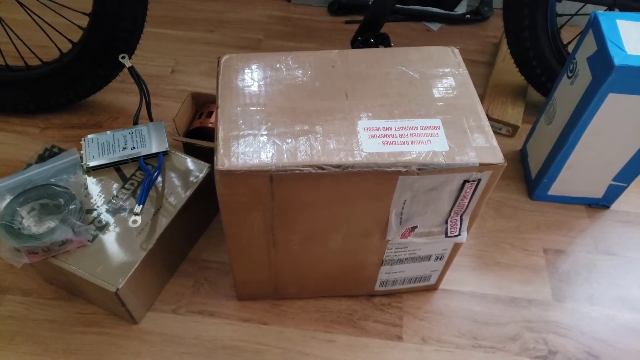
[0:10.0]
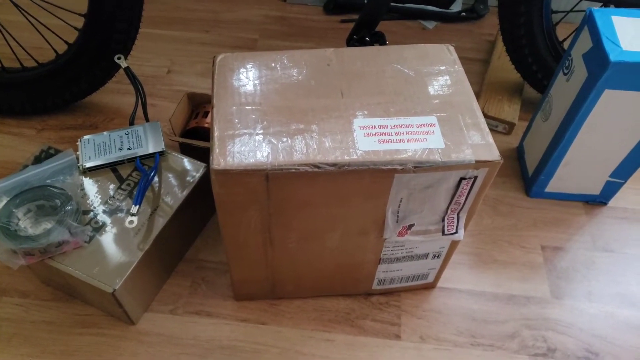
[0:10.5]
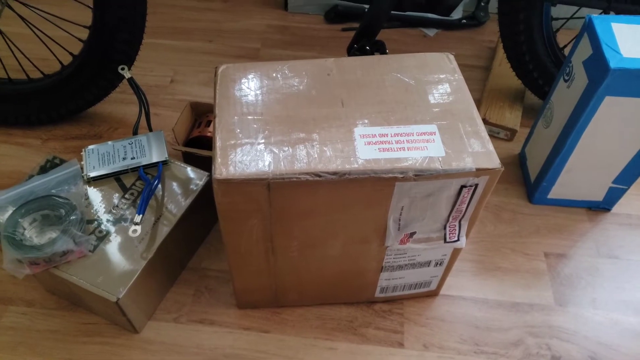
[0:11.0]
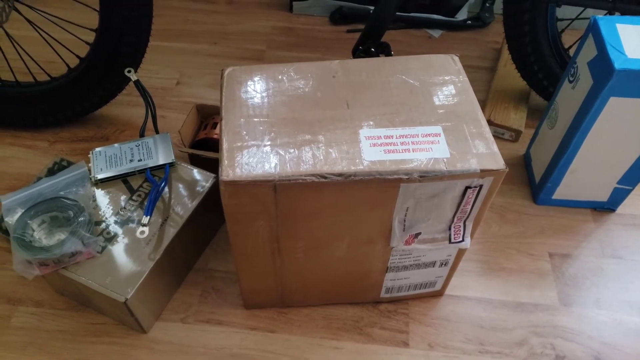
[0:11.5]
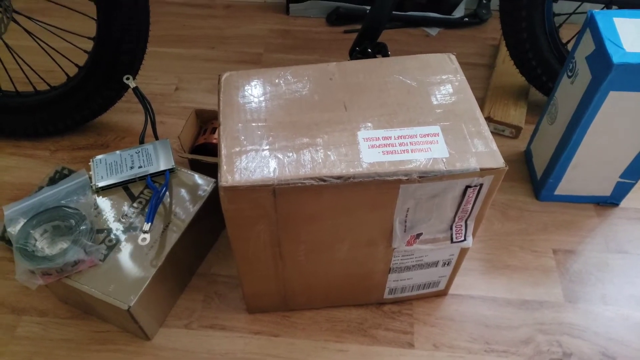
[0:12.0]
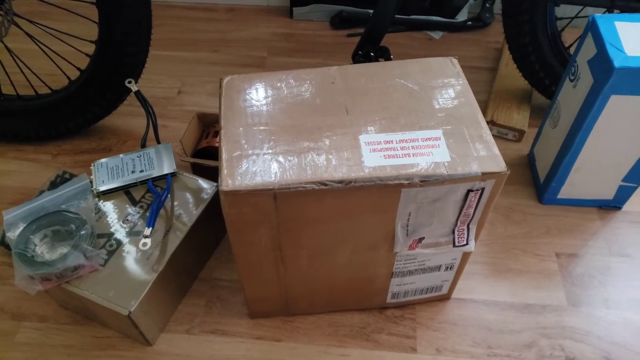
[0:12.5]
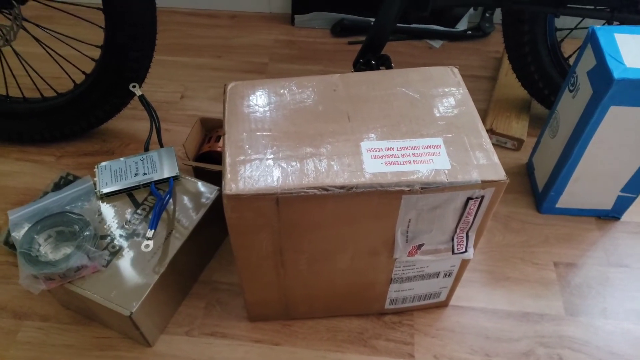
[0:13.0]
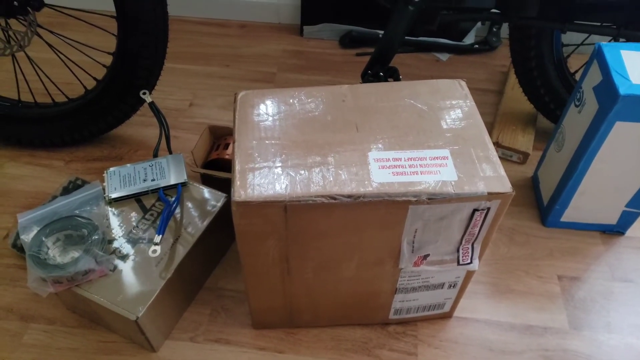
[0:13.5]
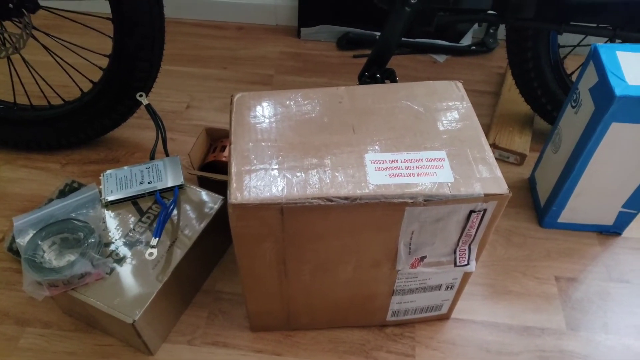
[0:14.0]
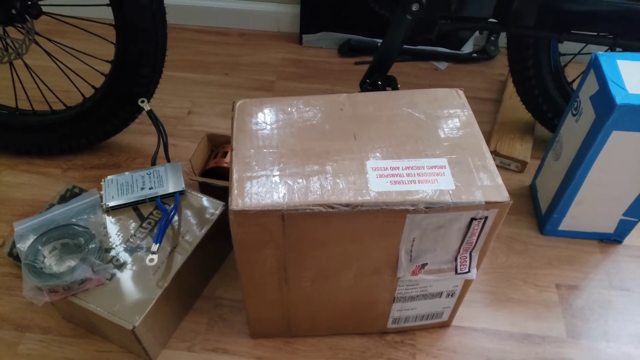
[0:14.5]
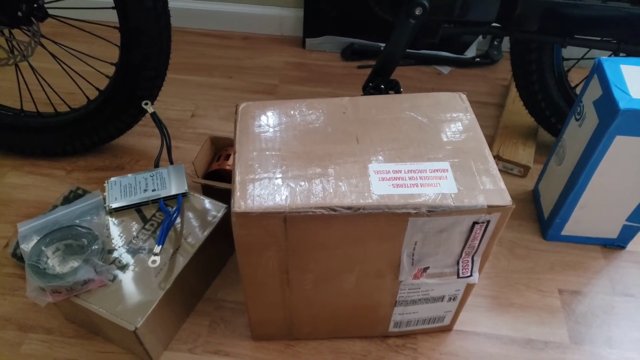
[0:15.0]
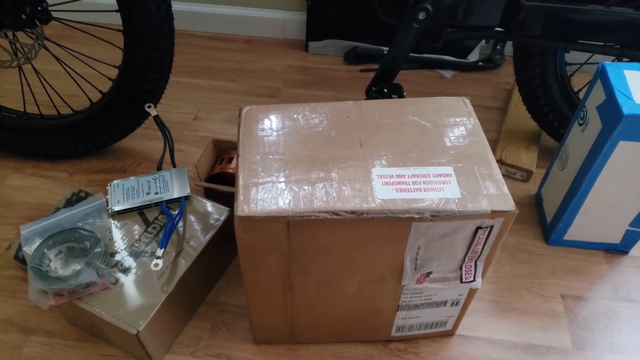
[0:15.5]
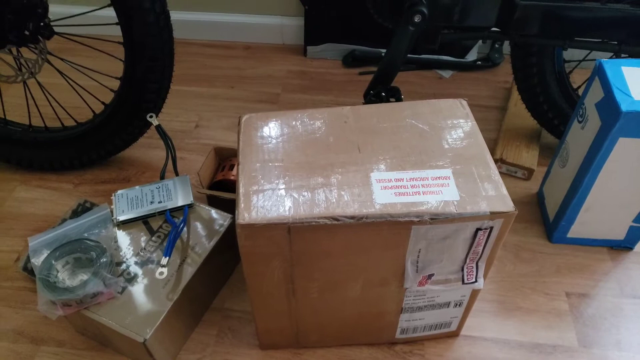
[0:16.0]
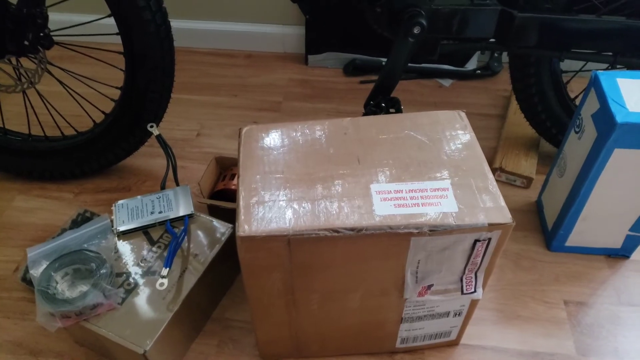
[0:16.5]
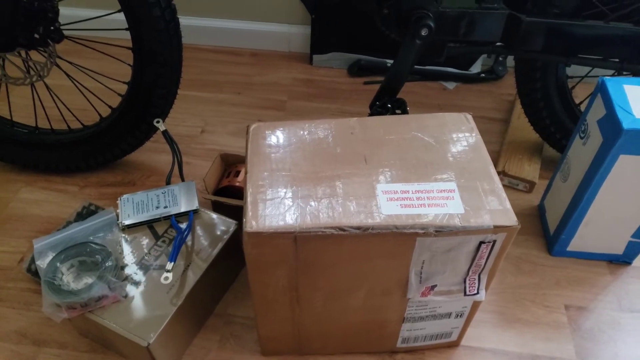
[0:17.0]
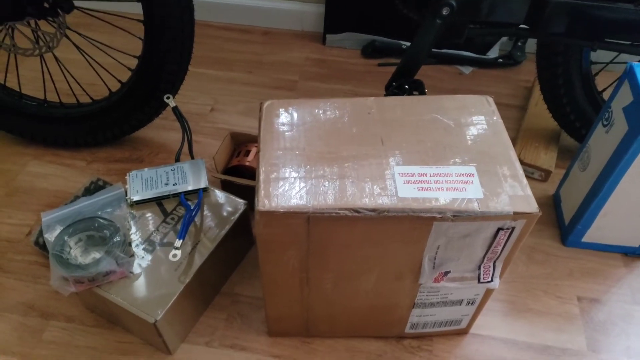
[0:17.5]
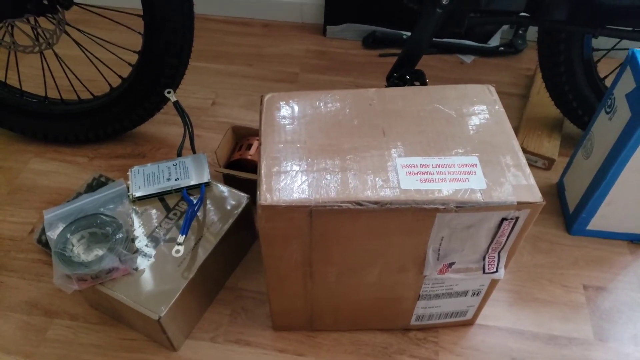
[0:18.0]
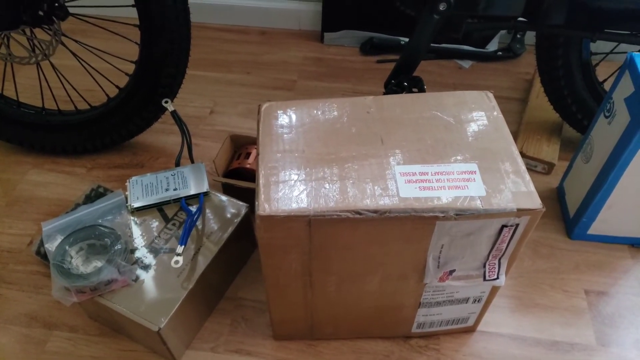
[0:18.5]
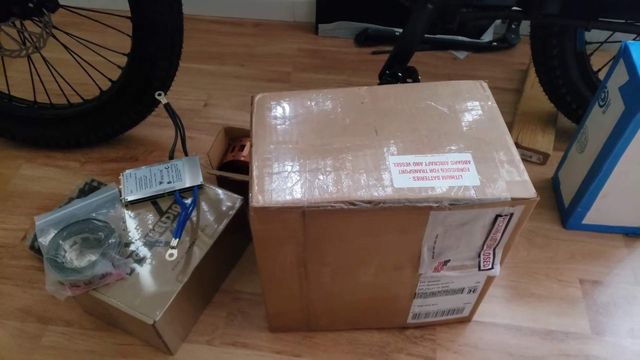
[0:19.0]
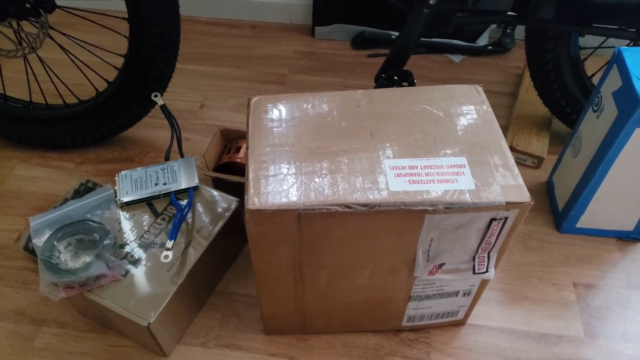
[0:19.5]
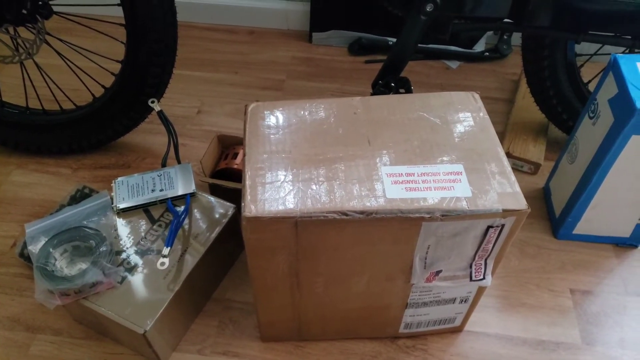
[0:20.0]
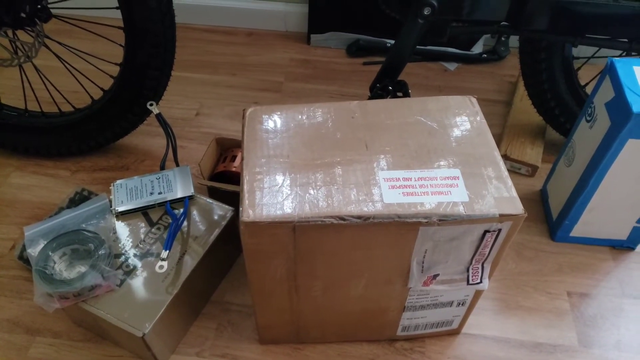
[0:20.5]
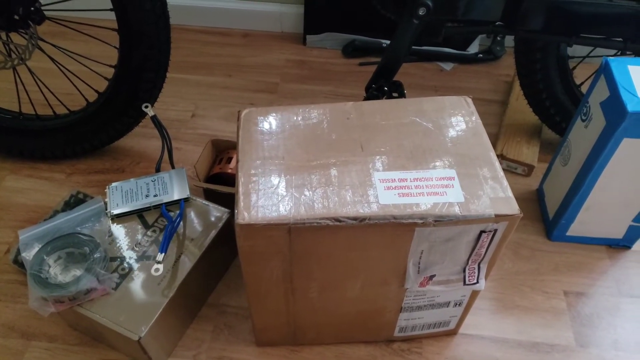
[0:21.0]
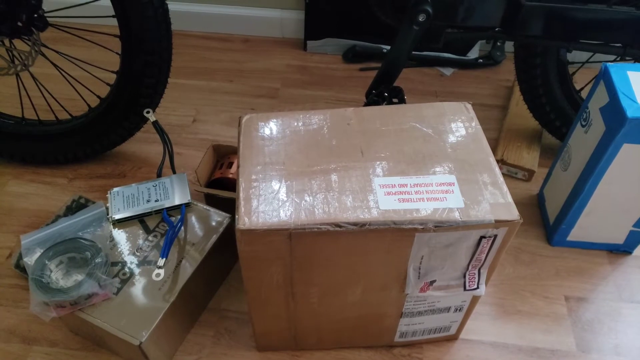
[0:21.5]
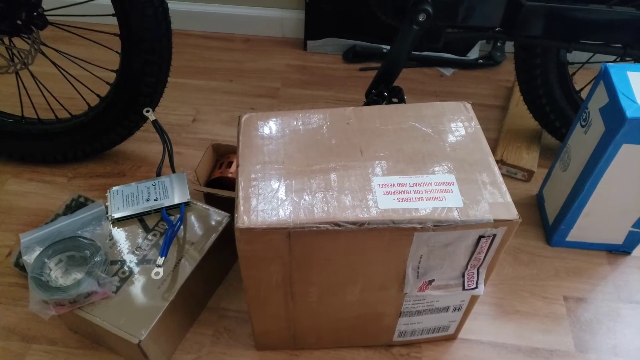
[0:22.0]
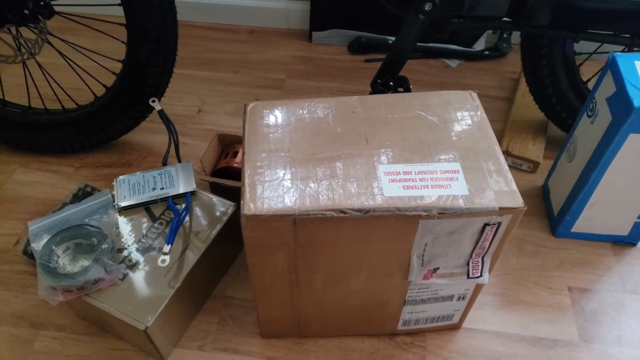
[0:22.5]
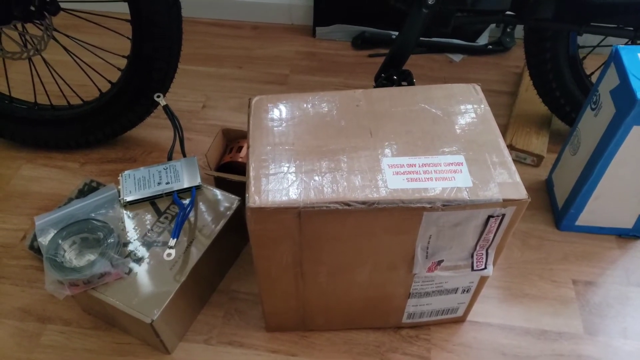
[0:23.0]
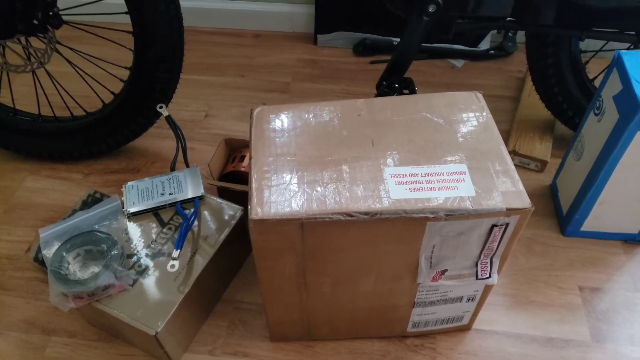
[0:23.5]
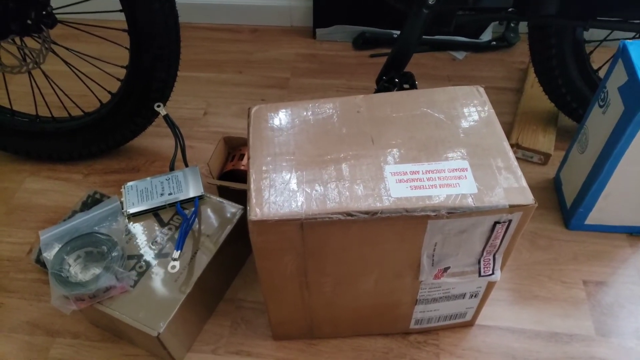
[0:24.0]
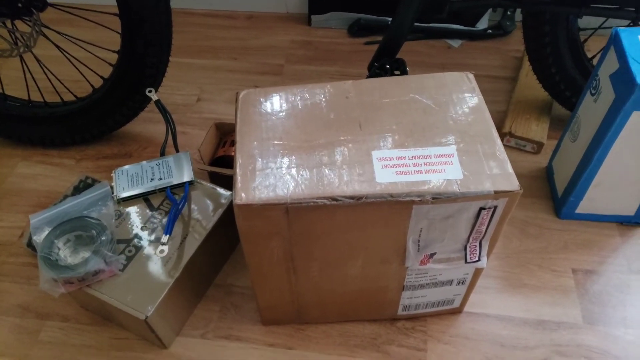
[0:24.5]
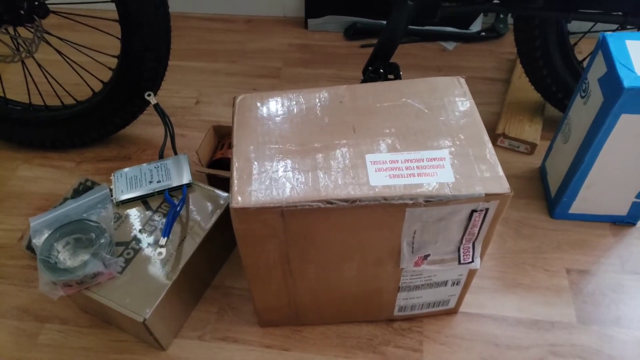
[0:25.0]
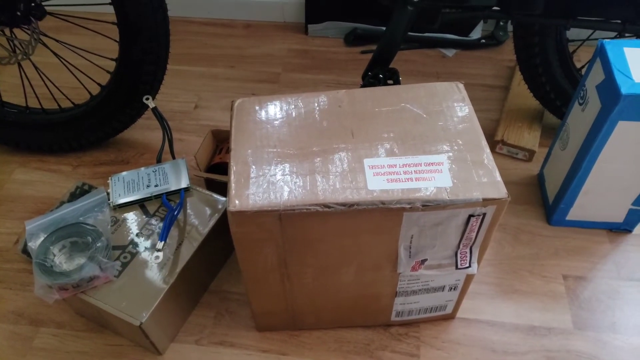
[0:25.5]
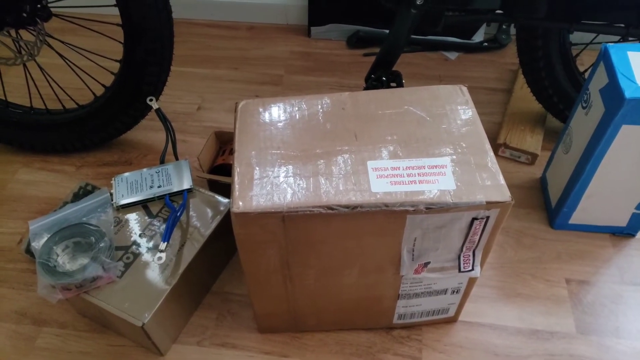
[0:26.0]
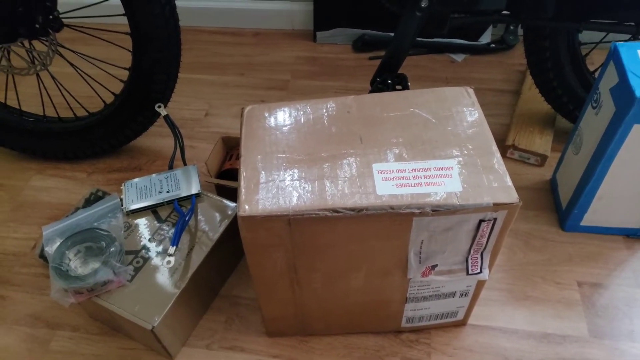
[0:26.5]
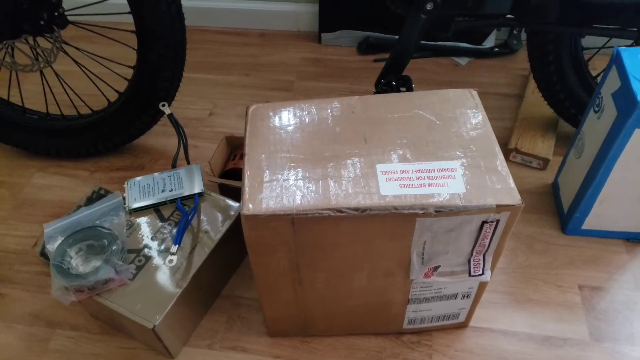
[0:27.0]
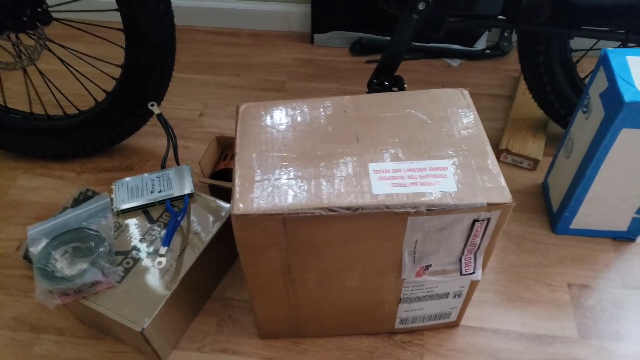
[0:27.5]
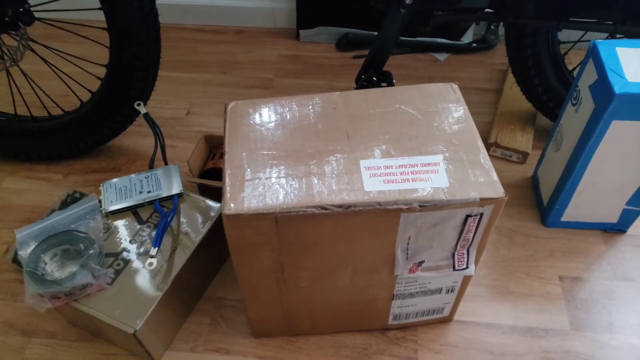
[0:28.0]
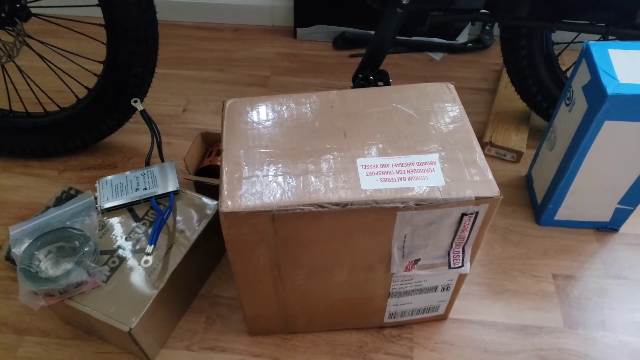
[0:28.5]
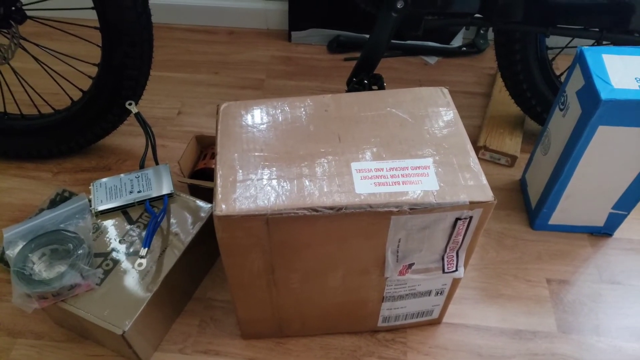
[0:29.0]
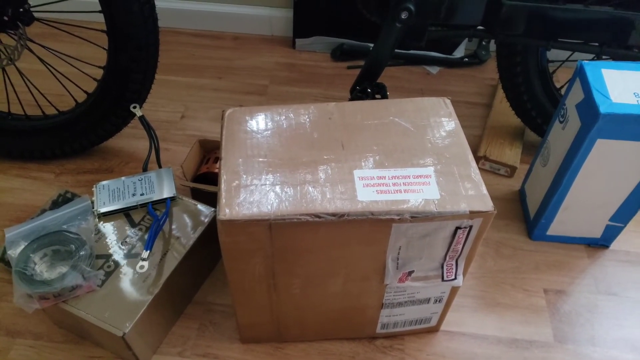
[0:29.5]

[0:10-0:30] The brown box is in focus. The camera seems handheld and shakes slightly as the person apparently tries to stabilize it without much success. The person stands in place, seemingly talking about the box, which stays at the center of the frame and apparently says "fragile" or something similar. Nothing else really happens. Behind the bike, something like a wooden plank slightly sticks out just underneath it, or possibly a small box that looks like a wooden plank.